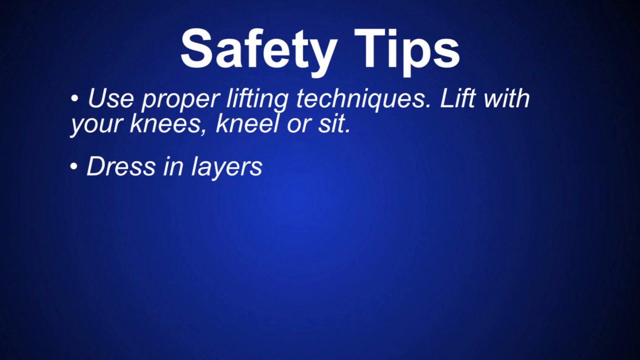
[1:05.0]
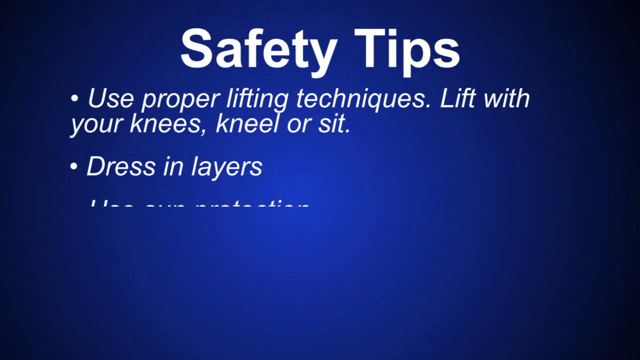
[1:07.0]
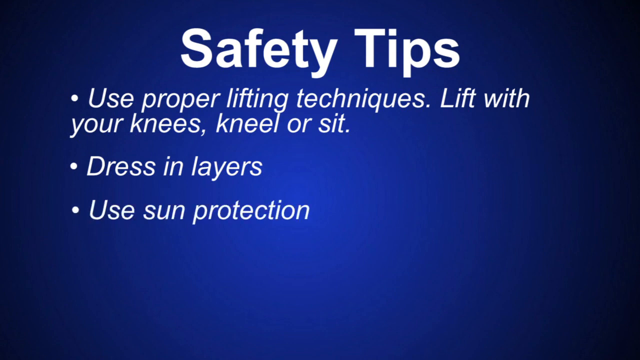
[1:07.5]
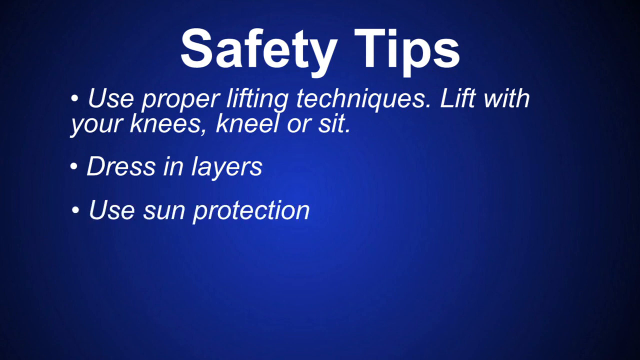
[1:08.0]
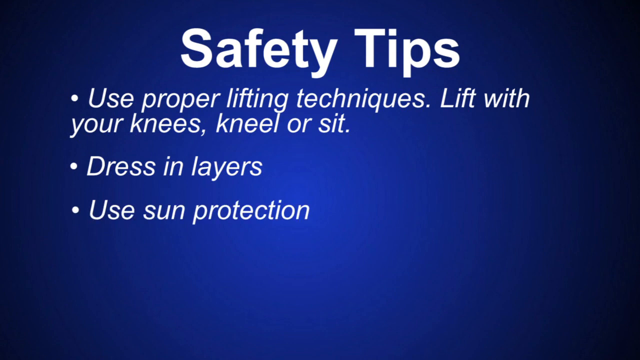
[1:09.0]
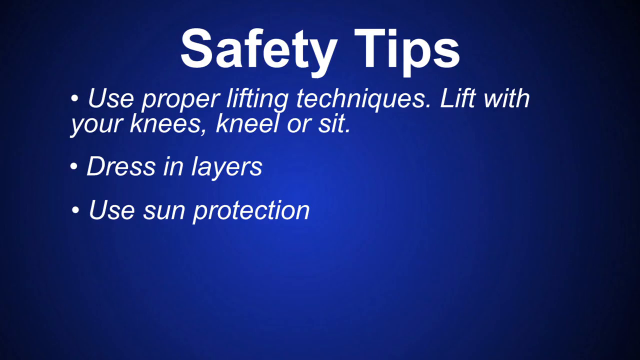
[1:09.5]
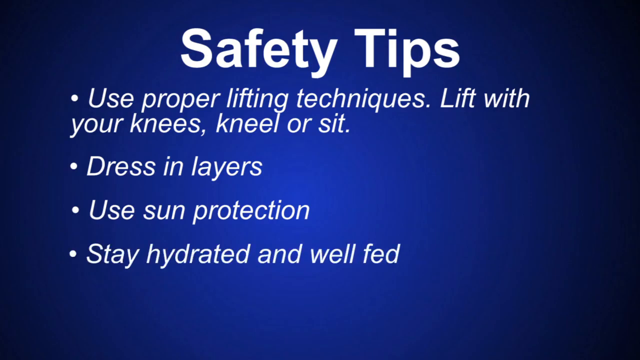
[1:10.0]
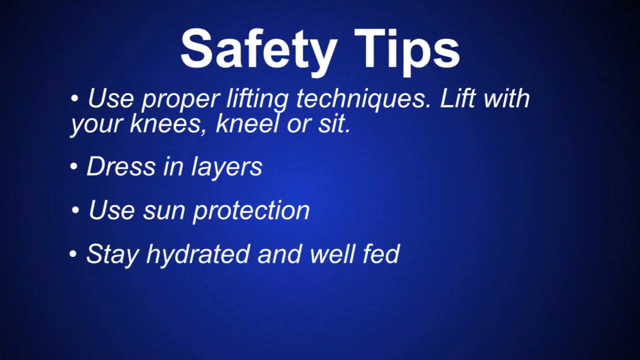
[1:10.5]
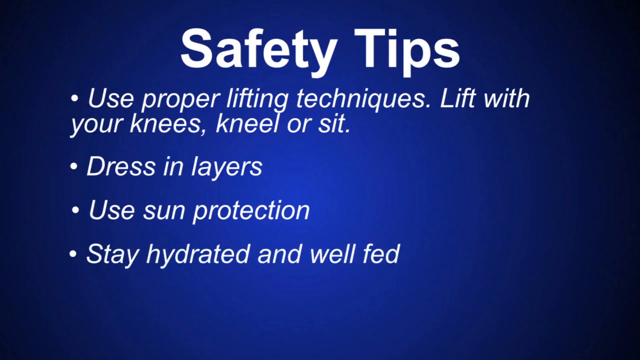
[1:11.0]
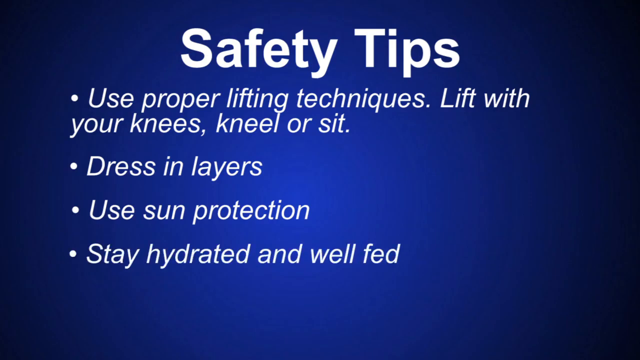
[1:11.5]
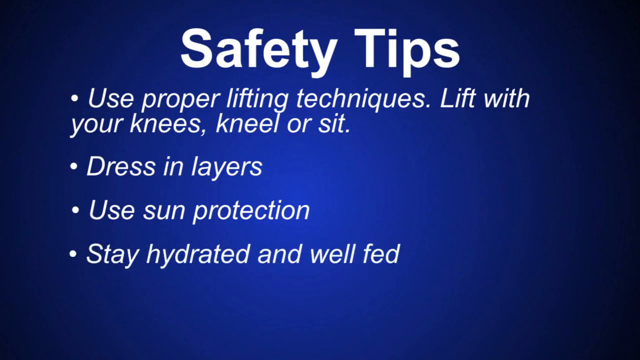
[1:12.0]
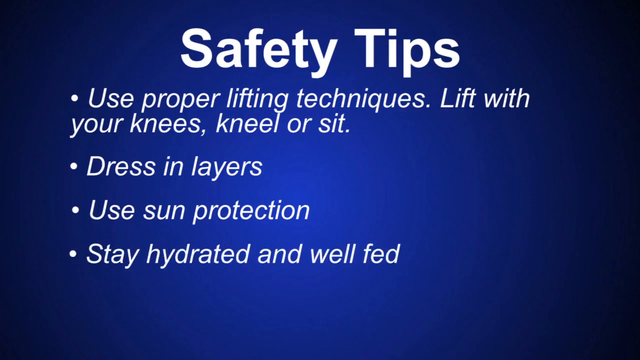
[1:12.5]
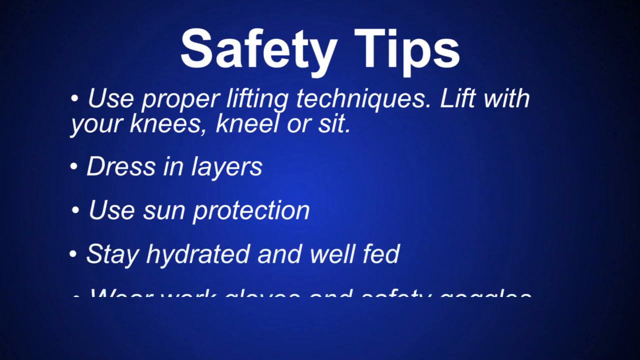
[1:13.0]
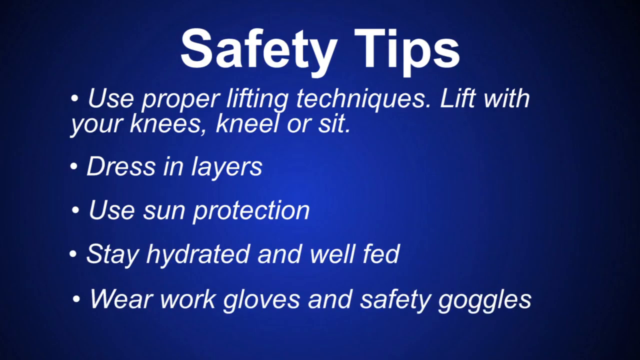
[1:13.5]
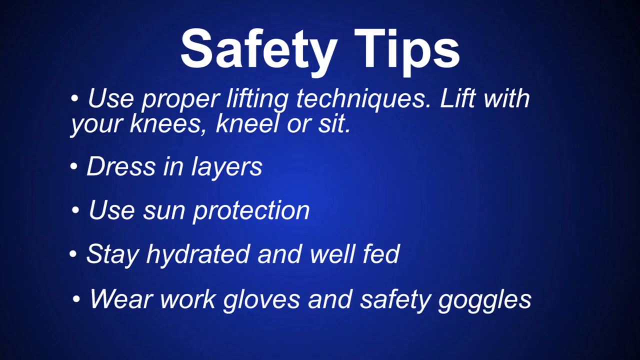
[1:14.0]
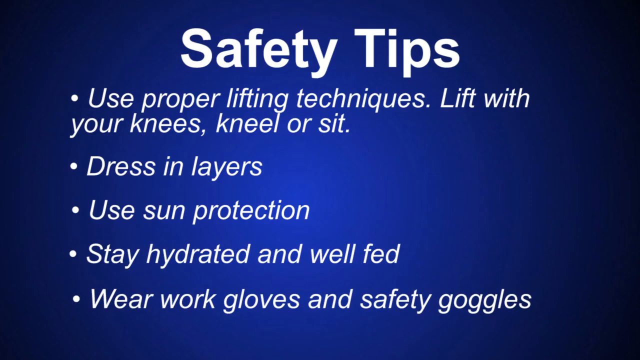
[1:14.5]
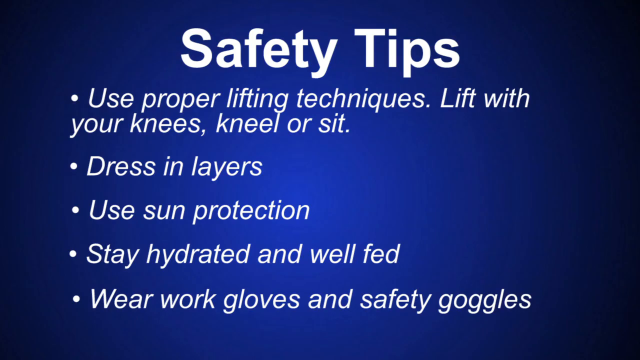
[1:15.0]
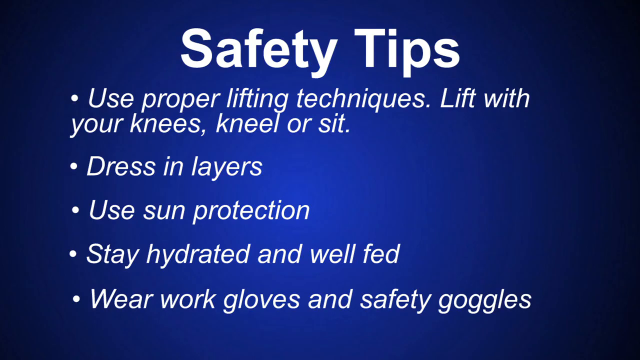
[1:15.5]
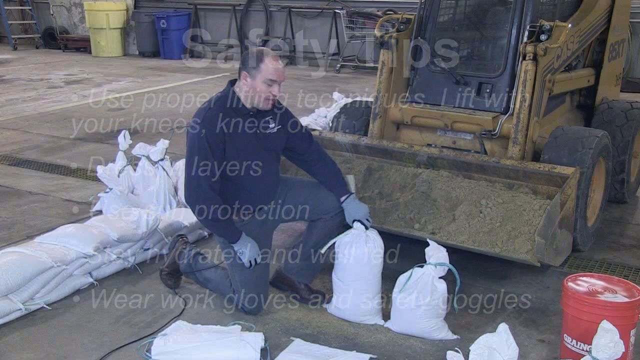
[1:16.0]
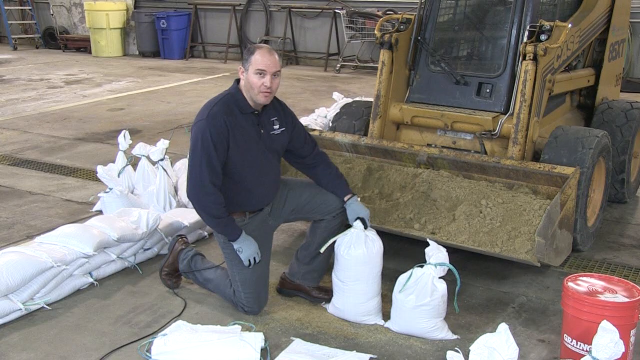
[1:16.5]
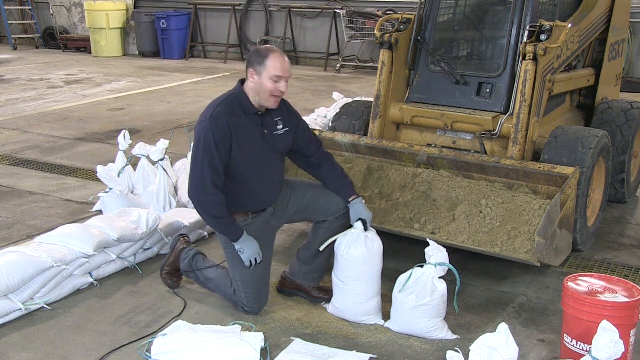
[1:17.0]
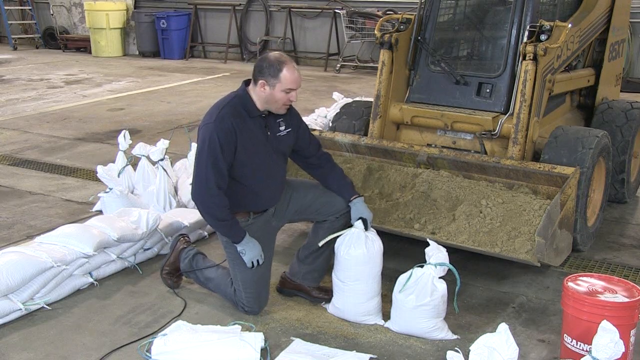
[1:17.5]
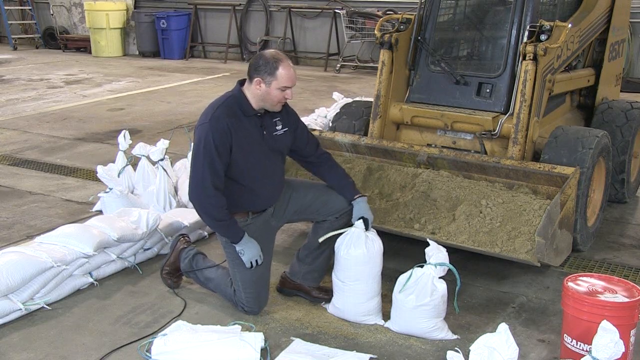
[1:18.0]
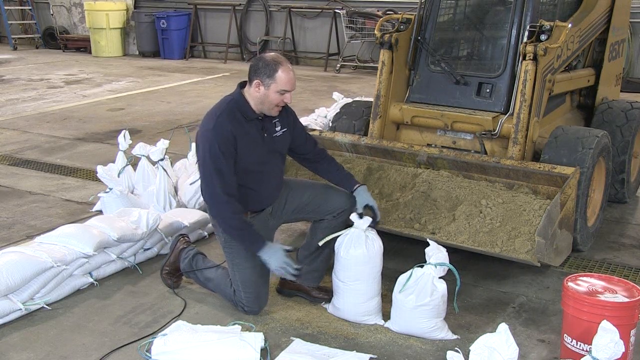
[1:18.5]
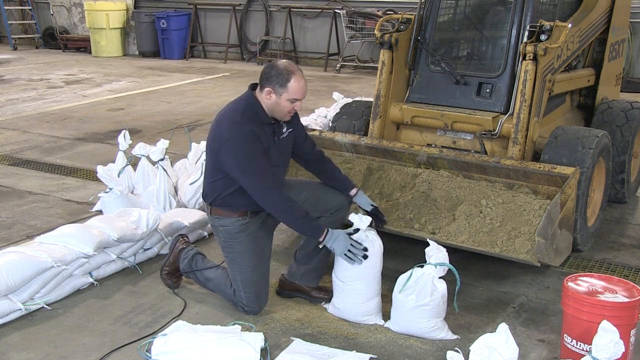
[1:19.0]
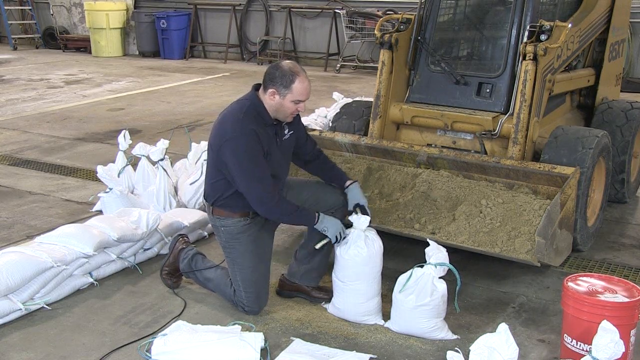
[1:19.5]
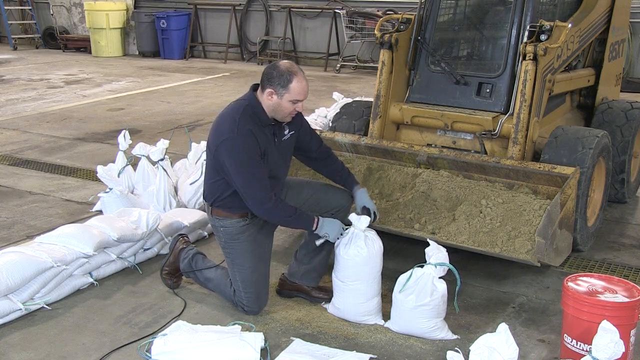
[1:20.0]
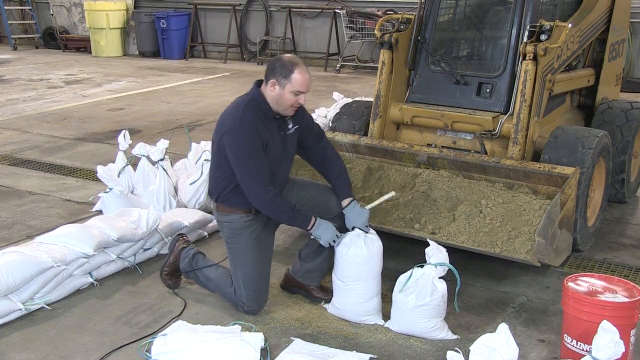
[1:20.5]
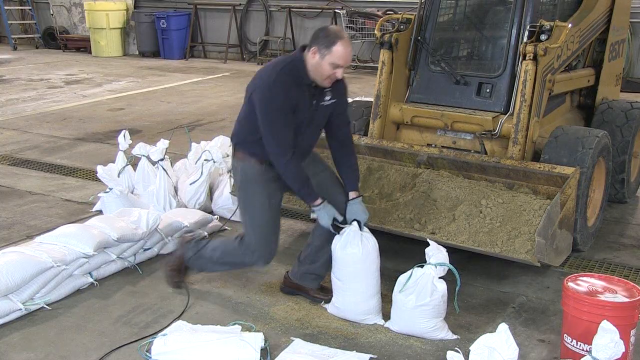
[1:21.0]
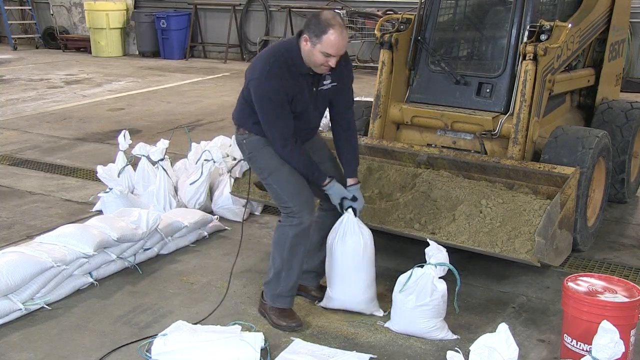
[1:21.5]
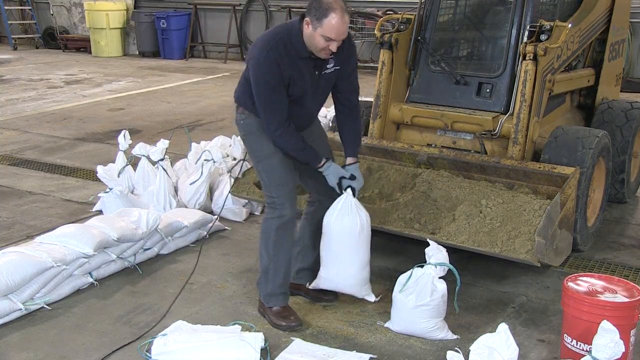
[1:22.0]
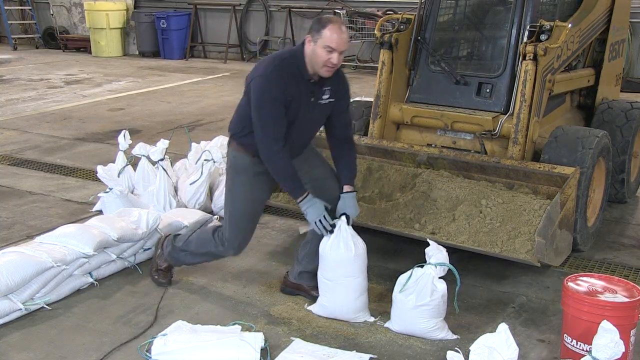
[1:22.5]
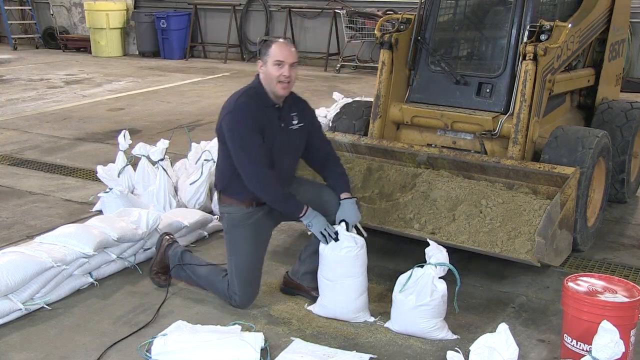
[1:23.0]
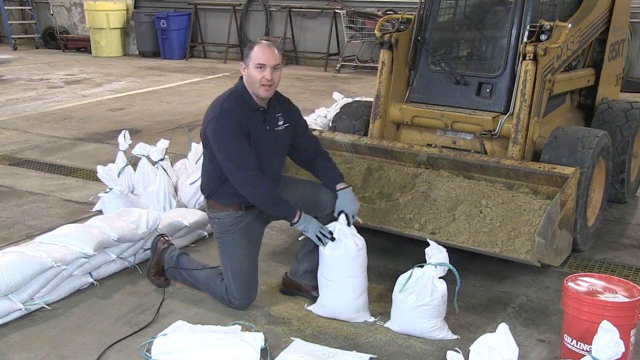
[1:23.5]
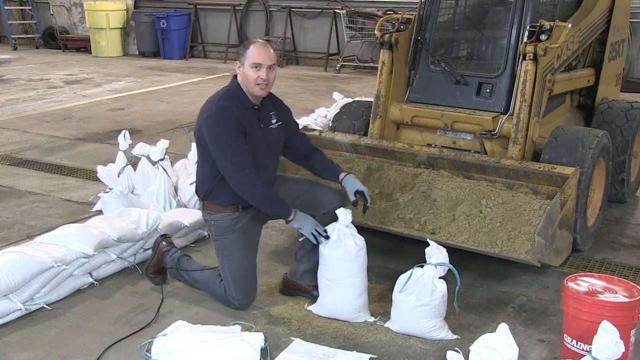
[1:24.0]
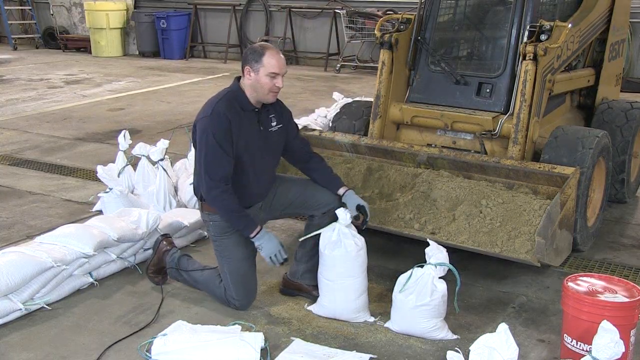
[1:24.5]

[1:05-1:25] The safety tips continue on a blue screen with white text: the first tips cover lifting properly and the second is to dress in layers. The third tip is to use sun protection, the fourth is to stay well hydrated and fed, and the fifth and final tip is to wear goggles and work gloves for protection. The video then transitions to the speaker holding a filled sandbag, wearing safety gloves and dressed in comfortable layers. He is in a warehouse, not out in the sun.